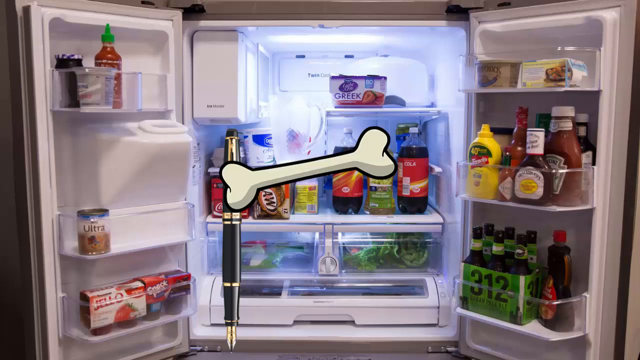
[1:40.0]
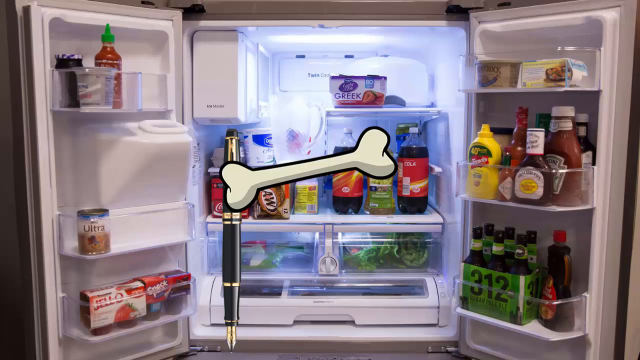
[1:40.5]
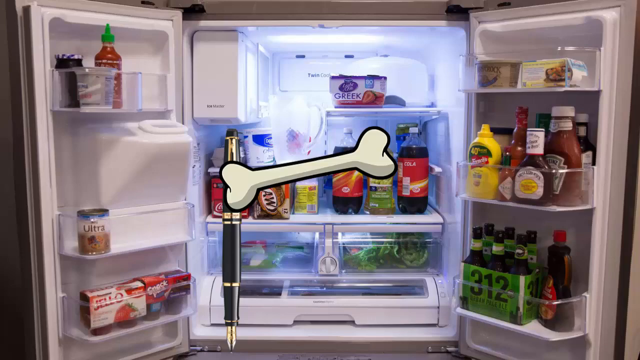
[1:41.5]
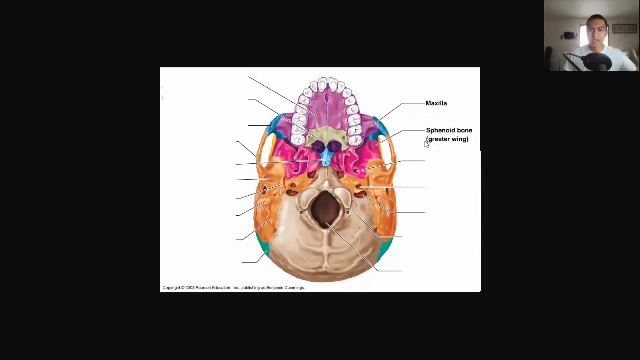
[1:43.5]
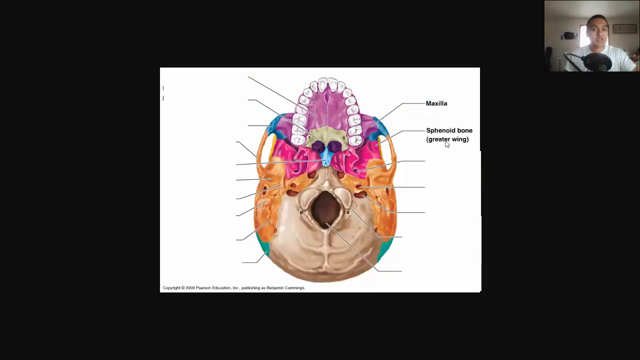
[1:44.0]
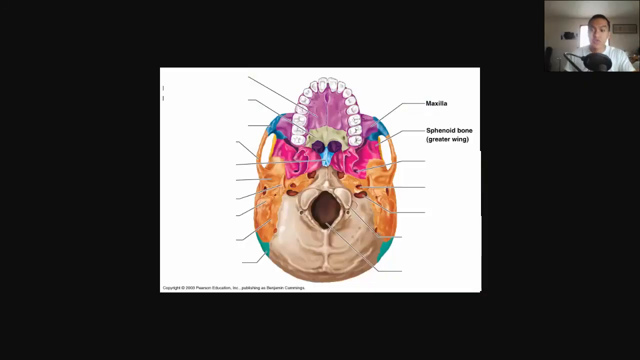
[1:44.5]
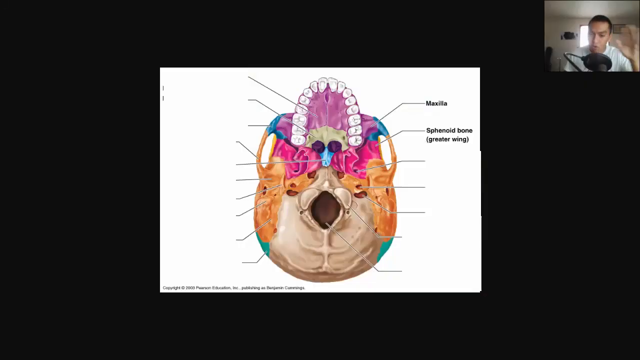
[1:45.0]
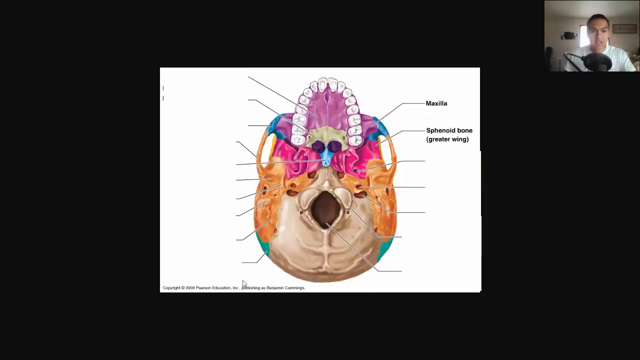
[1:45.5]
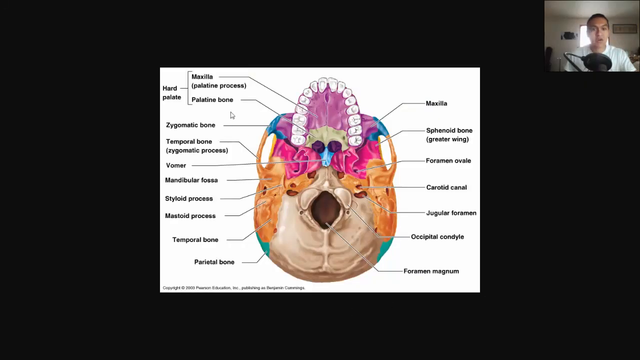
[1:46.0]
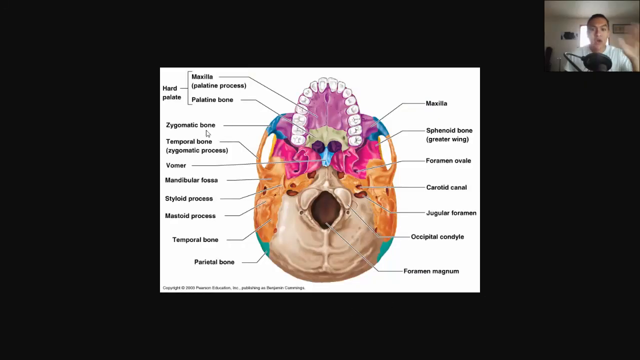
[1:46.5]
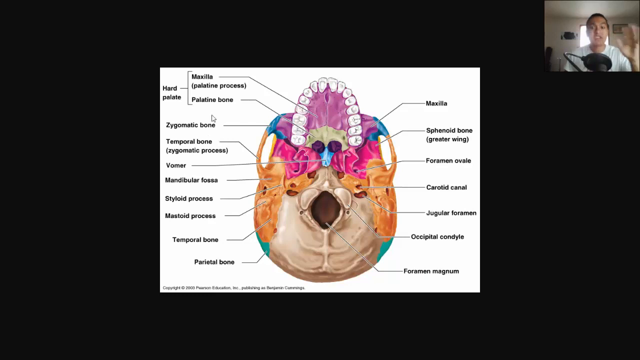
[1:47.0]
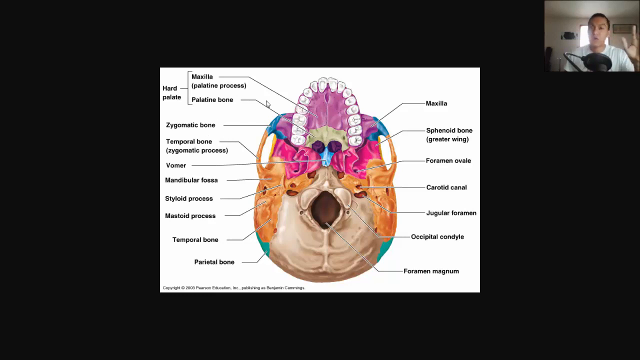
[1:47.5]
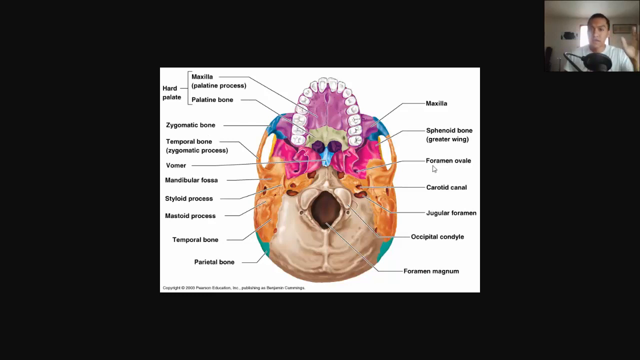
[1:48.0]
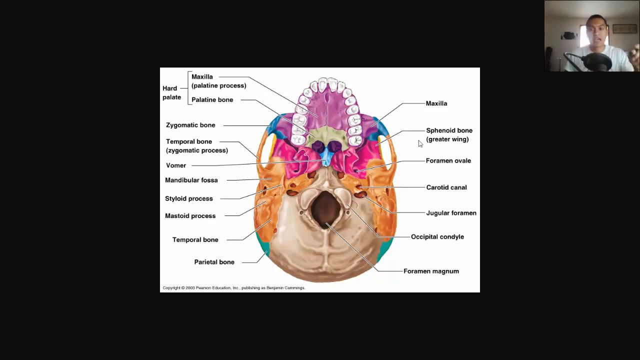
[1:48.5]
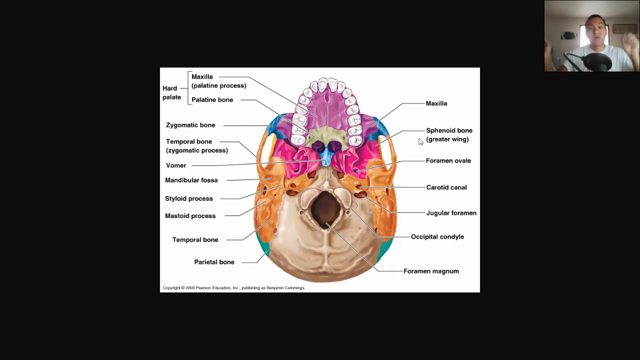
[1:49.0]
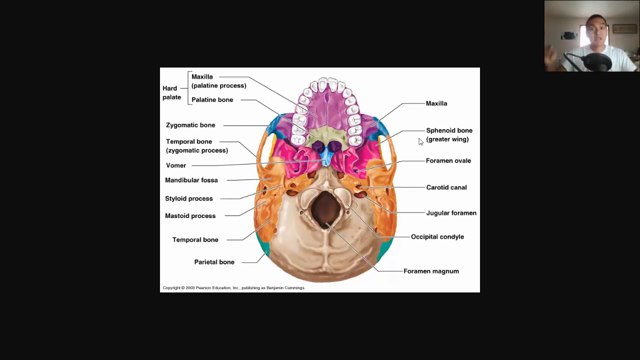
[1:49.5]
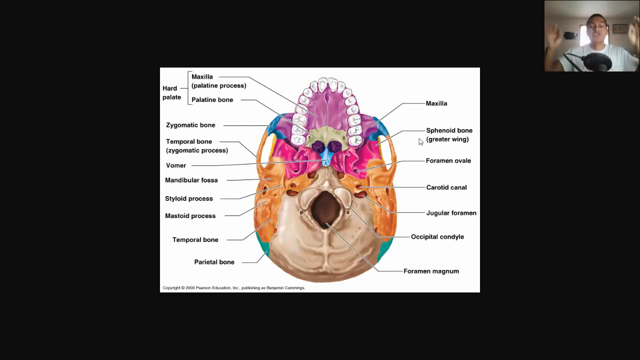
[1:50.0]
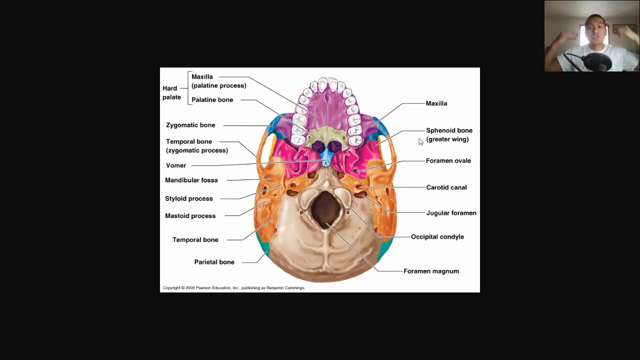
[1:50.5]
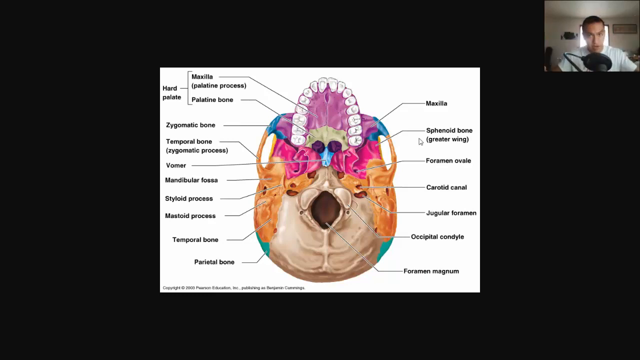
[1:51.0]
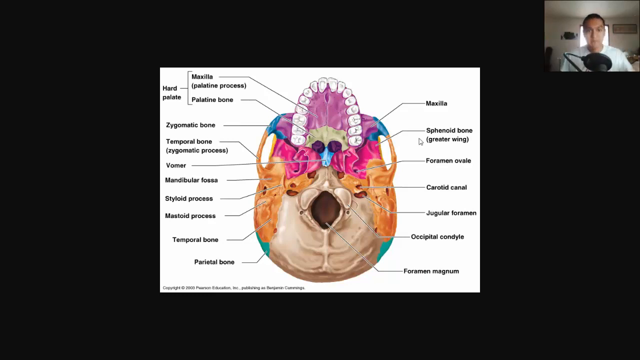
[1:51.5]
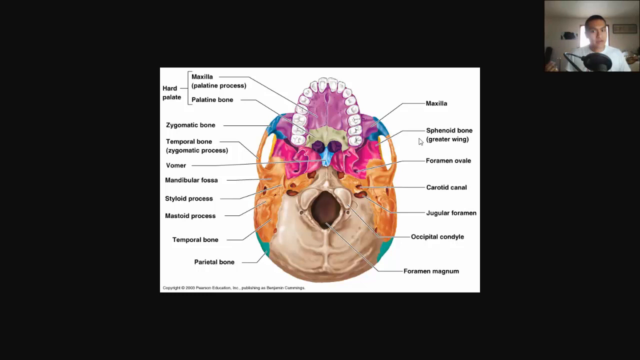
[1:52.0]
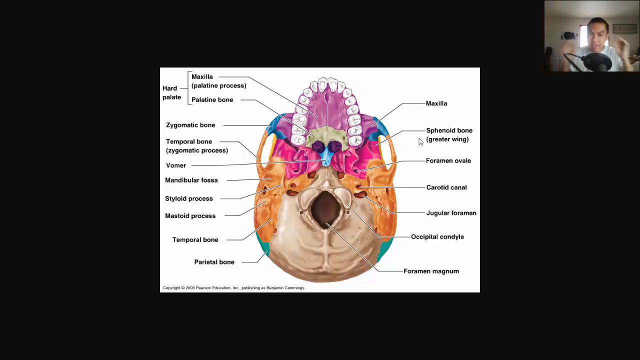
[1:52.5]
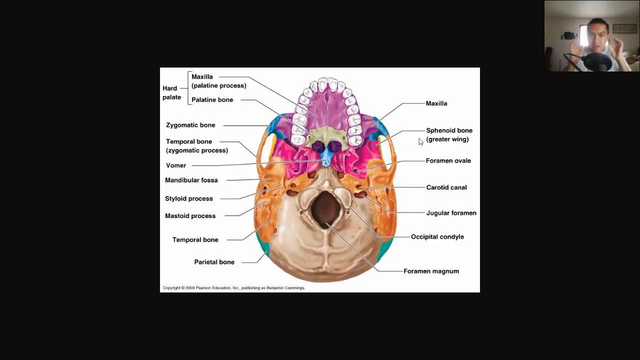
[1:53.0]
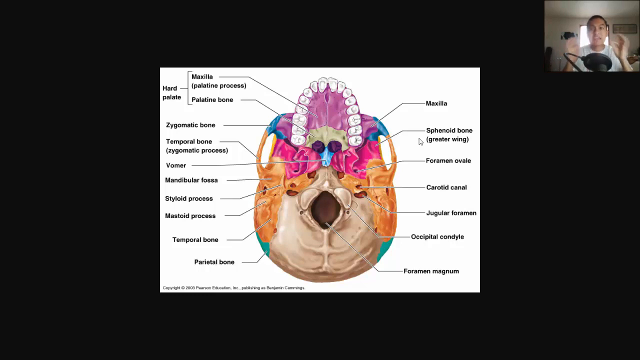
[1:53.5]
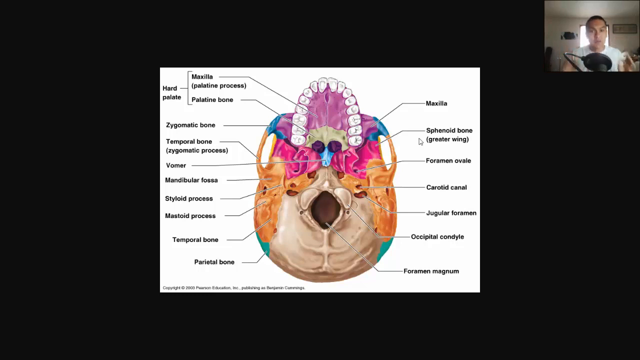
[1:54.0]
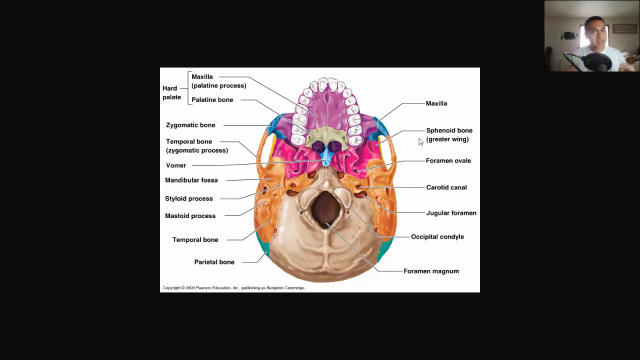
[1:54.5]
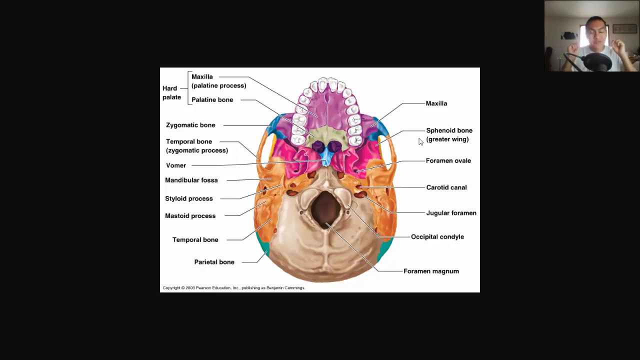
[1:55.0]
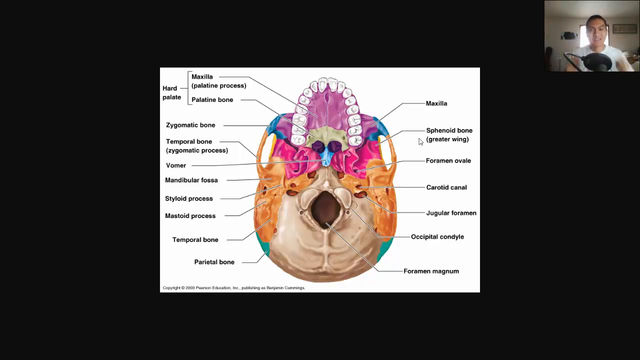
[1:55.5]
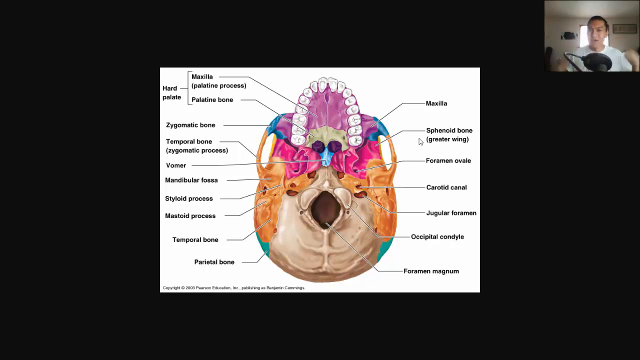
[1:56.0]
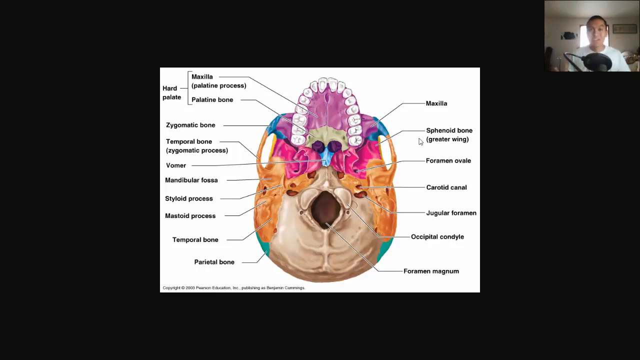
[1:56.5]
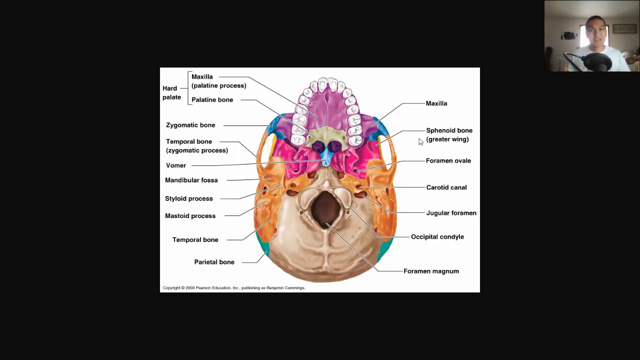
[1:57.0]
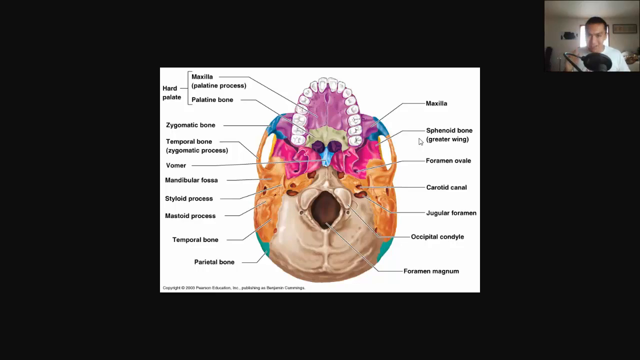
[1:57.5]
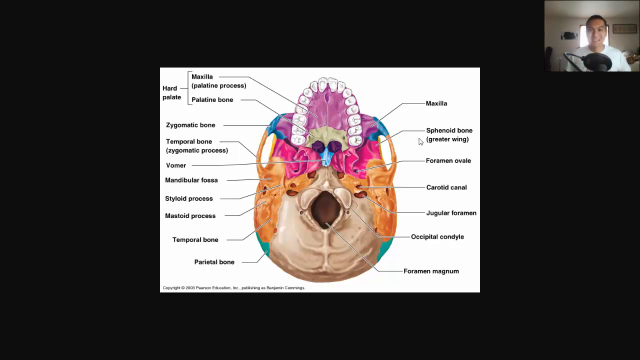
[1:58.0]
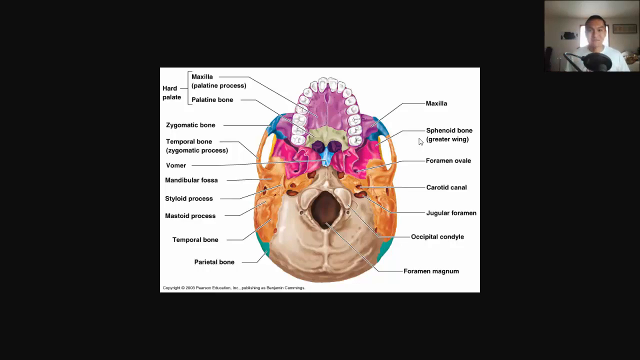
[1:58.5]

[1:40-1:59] The pen connected to the bone remains on screen. At the bottom, the man adds another label for the sphinoid bone, called the greater wing, with "greater wing" in parentheses. Then all the labels pop back up. In the top right, the man uses a lot of hand gestures with both hands. He looks like he is in his bedroom, which seems to have decent lighting but is fairly dark. A microphone at the very bottom is positioned up towards him; it has sort of an outer circular shell around it and a handle bent over to the left. He wears a plain white shirt, has really short black hair, and has a very confident expression.